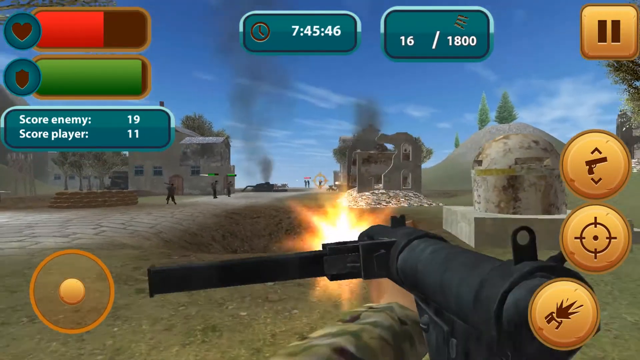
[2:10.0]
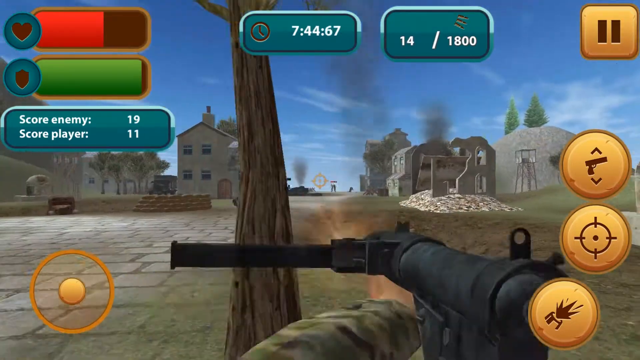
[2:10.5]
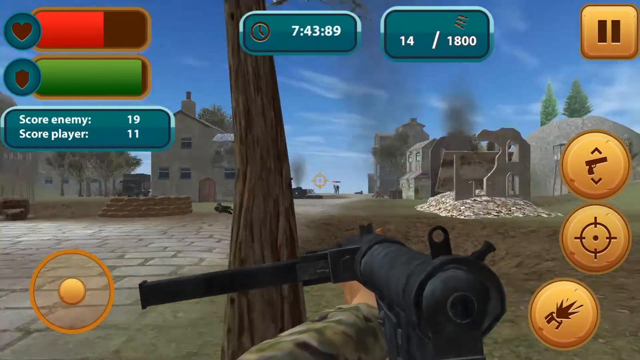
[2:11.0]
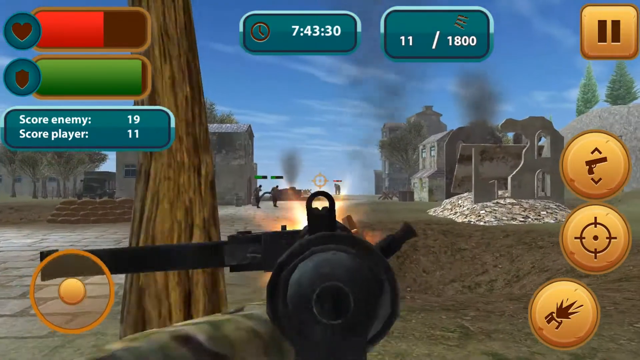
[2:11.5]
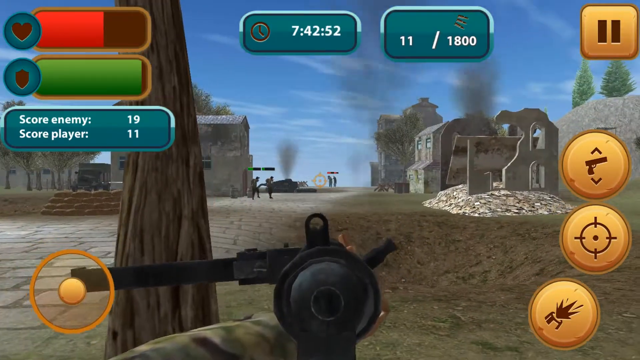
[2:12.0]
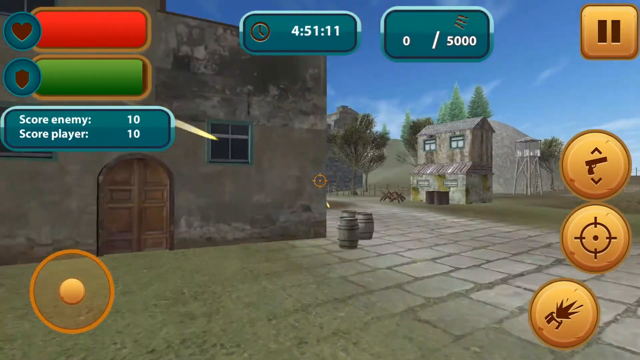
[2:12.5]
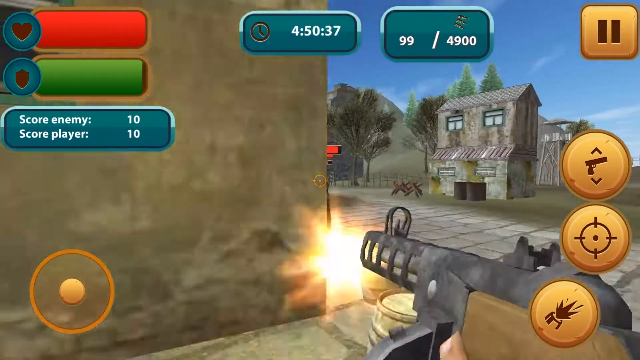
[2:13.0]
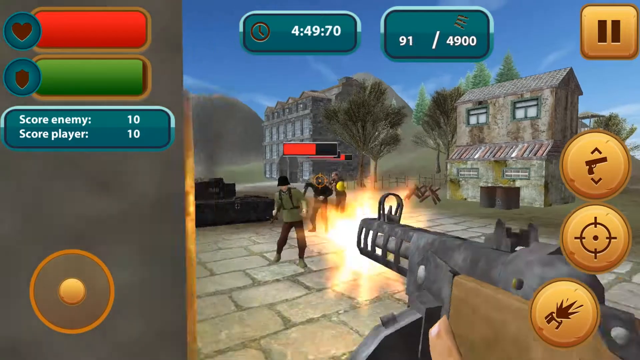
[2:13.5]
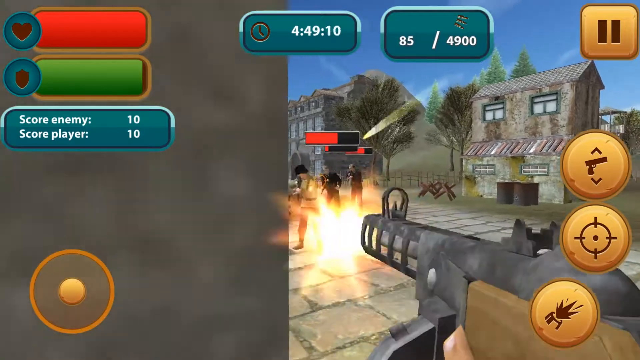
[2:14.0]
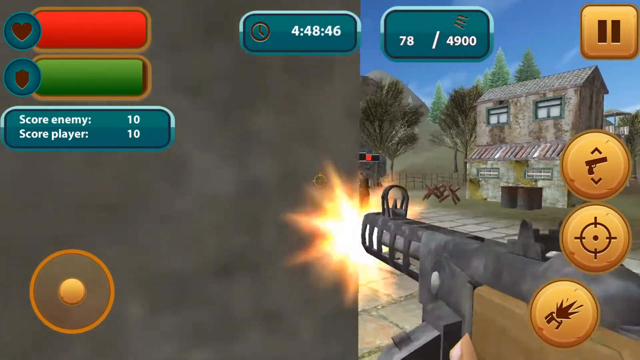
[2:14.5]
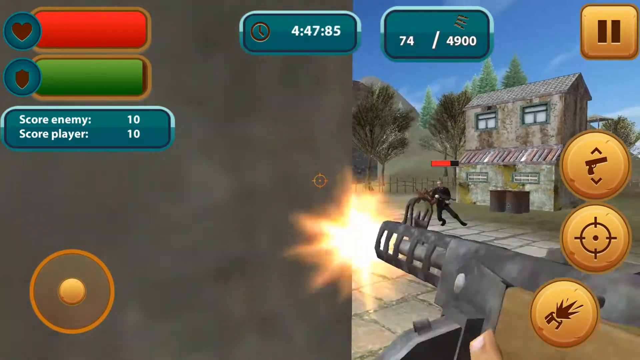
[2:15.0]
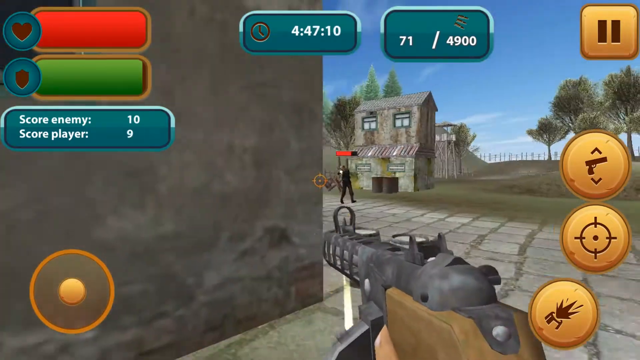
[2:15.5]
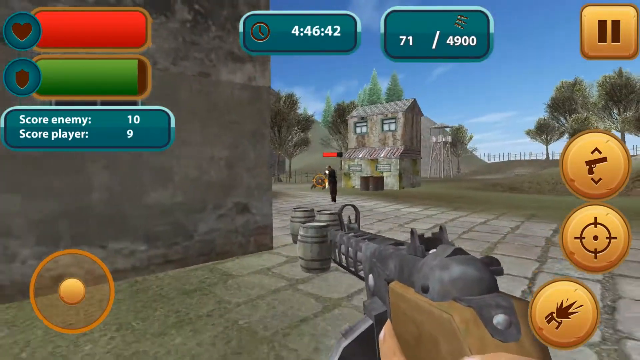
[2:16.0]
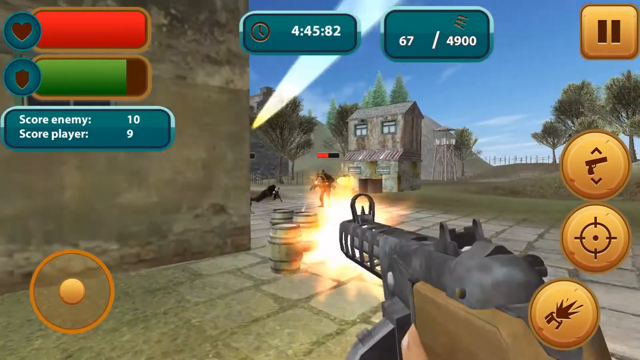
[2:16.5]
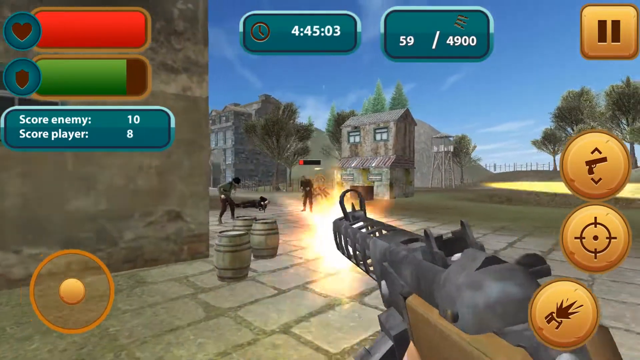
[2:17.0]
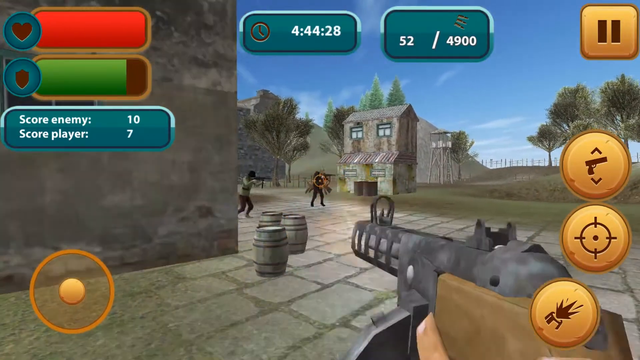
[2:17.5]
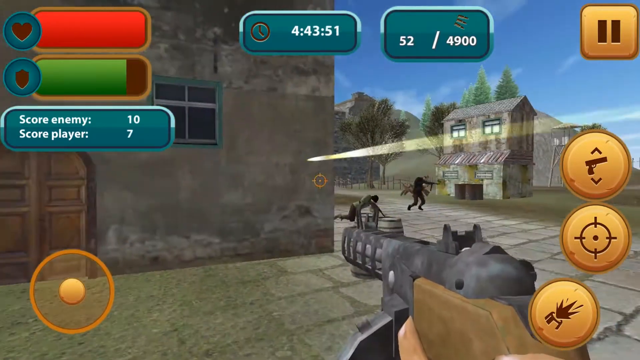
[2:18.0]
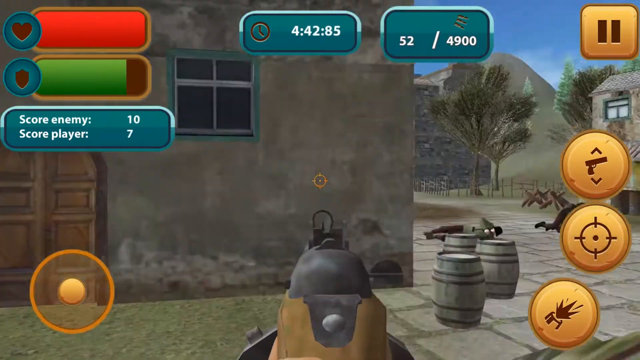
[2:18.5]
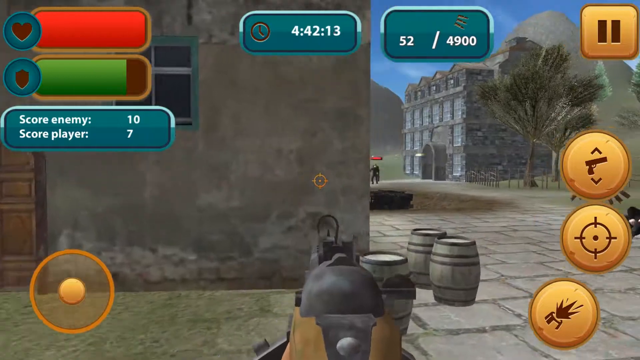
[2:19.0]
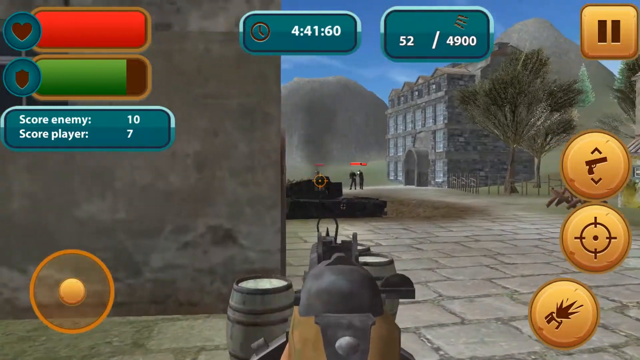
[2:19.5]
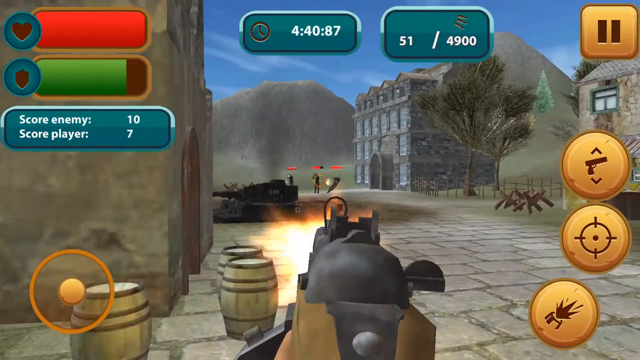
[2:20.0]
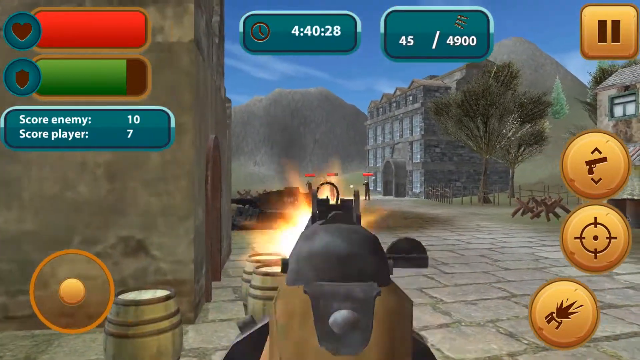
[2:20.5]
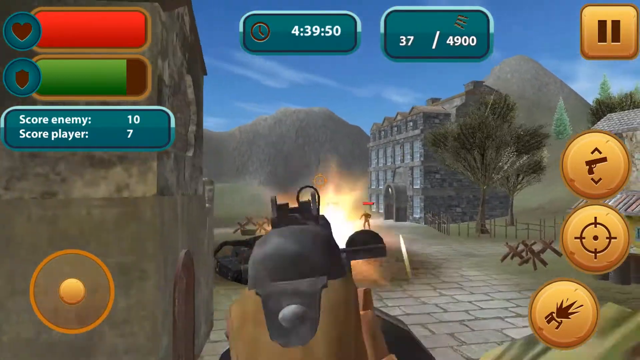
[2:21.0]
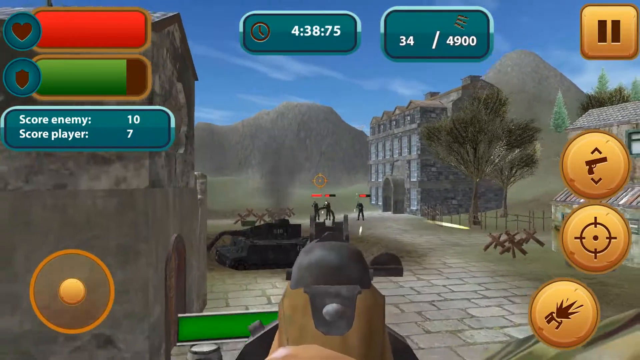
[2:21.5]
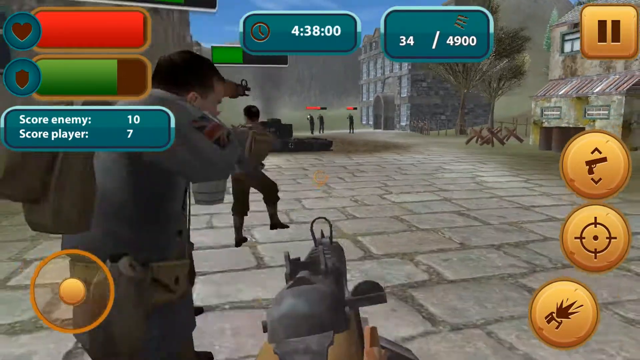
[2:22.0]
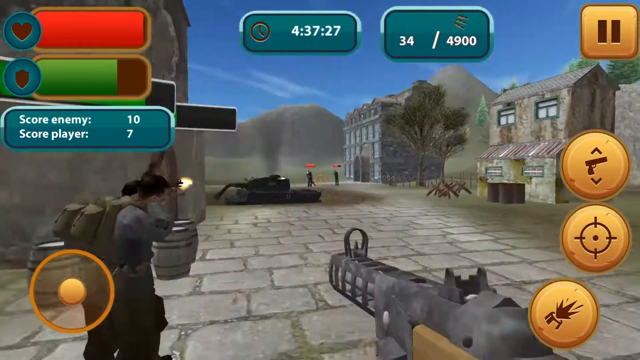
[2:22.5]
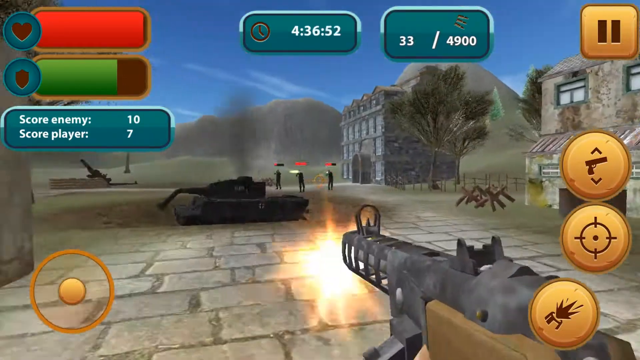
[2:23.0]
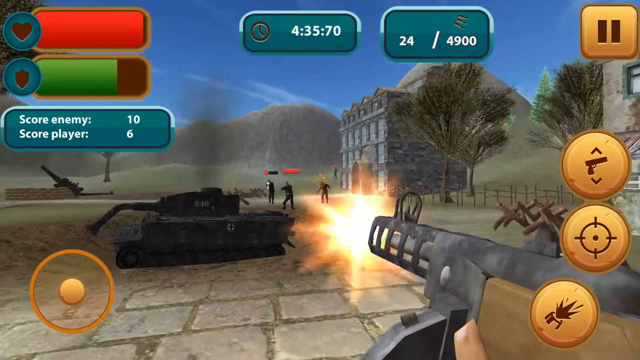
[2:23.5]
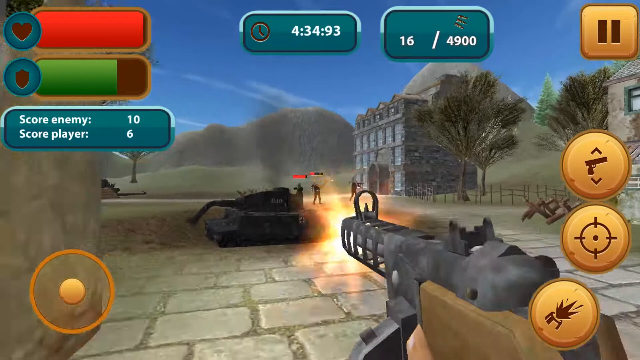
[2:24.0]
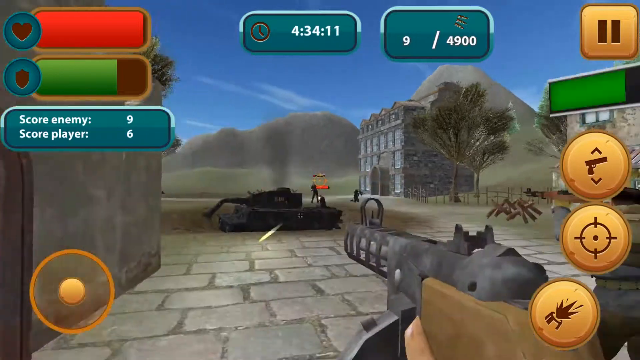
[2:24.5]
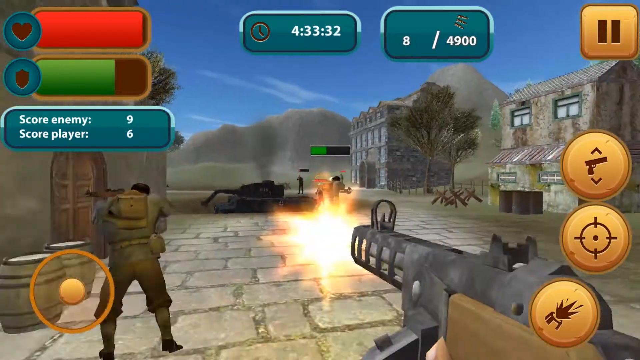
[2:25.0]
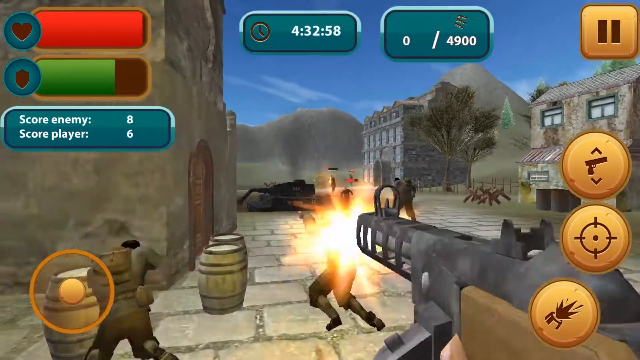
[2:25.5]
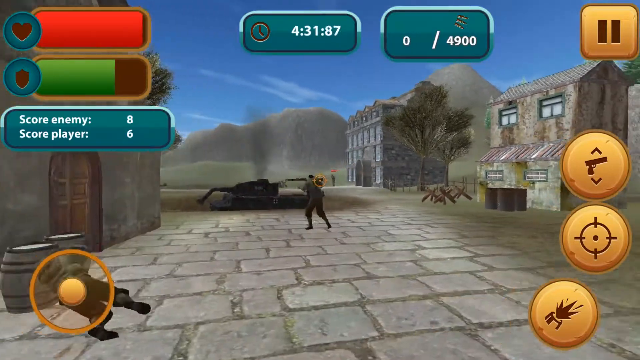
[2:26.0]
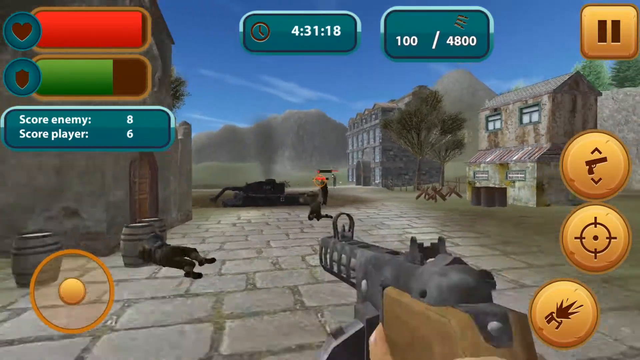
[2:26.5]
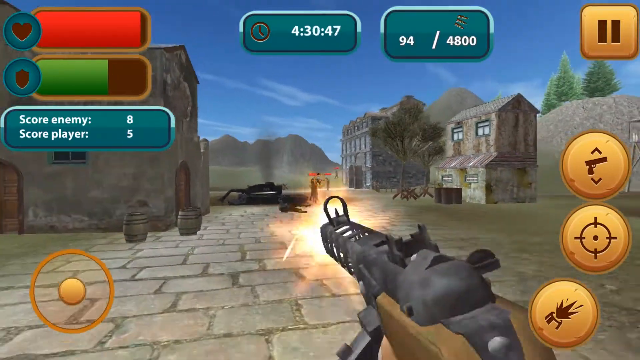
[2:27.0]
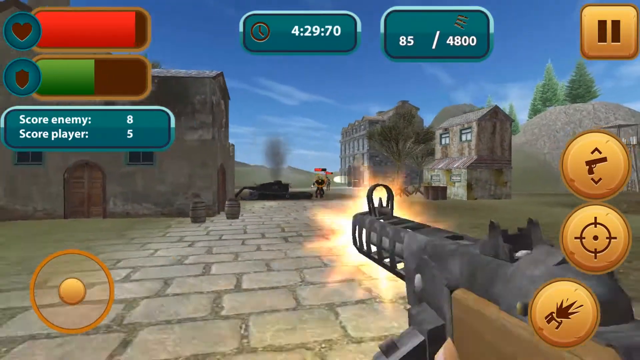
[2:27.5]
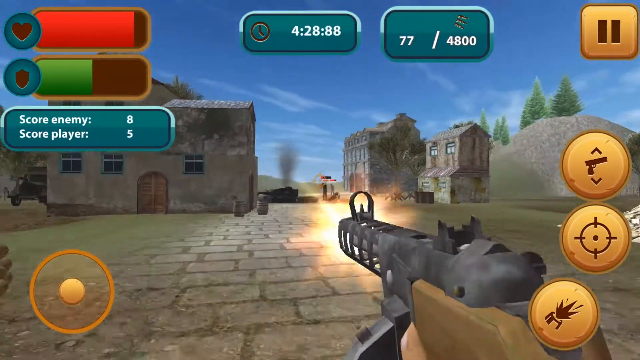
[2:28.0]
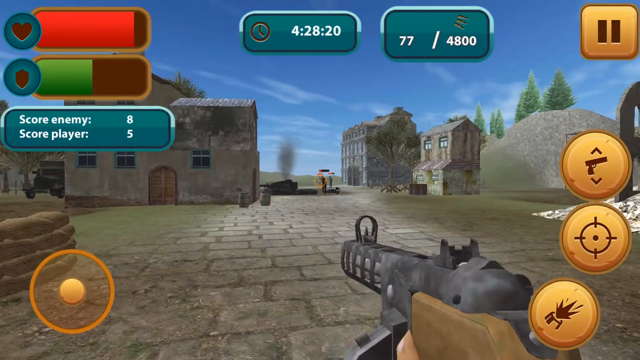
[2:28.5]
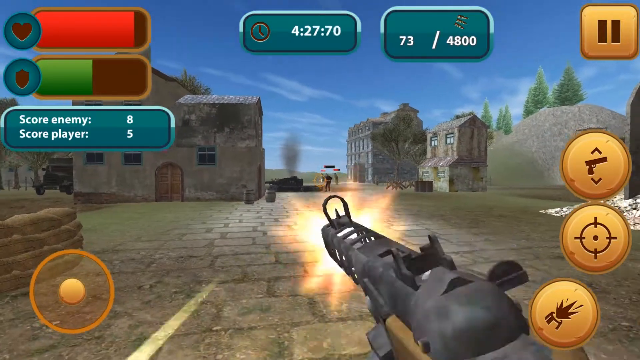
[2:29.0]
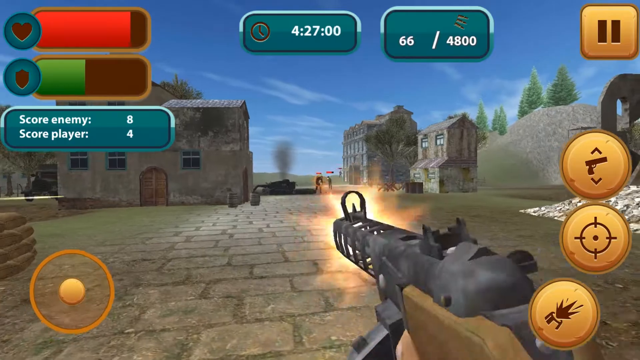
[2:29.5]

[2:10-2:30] The protagonist appears to use the aim-in function and two different SMGs: one that looks like the Grease Gun and a second, a Soviet SMG, possibly the PP-40. He appears to charge in once again, not dying this time. An NPC enemy dodges out of the way of the gunfire while flanked by his own side, and is possibly shot by them by accident. The protagonist gets stuck on a barrel, or a few barrels, at some points for a time, and then gets out.